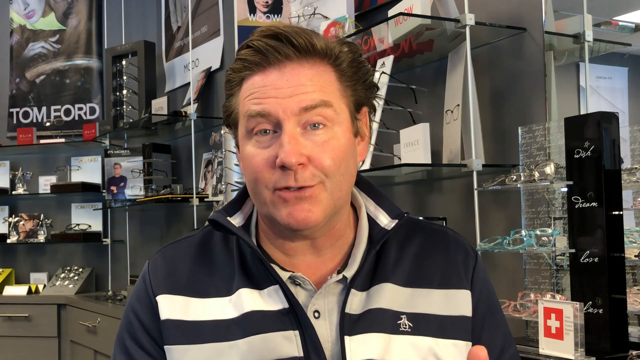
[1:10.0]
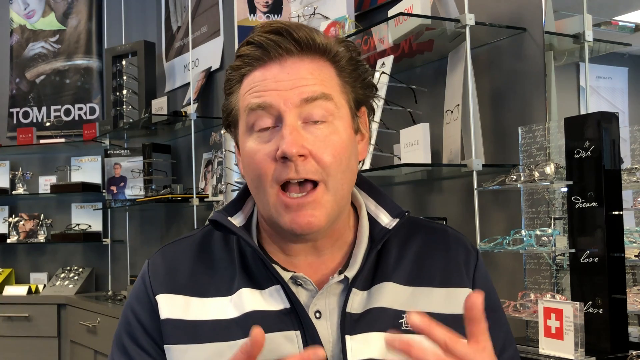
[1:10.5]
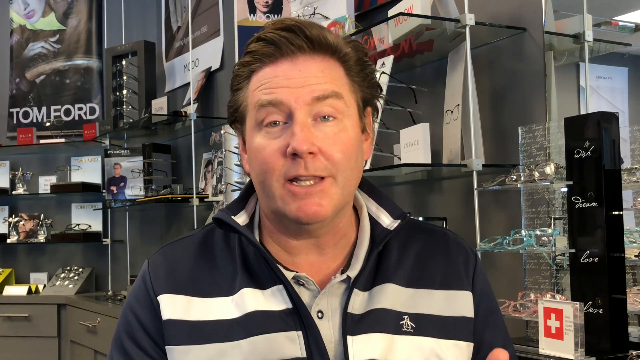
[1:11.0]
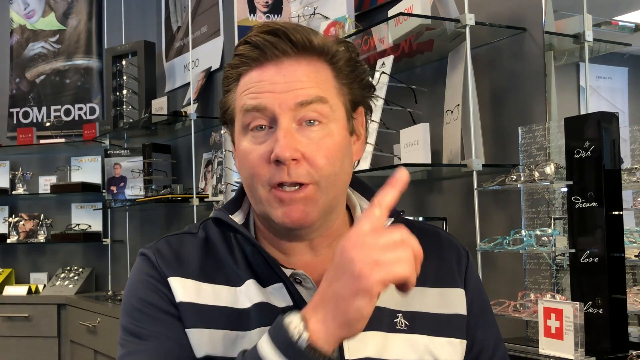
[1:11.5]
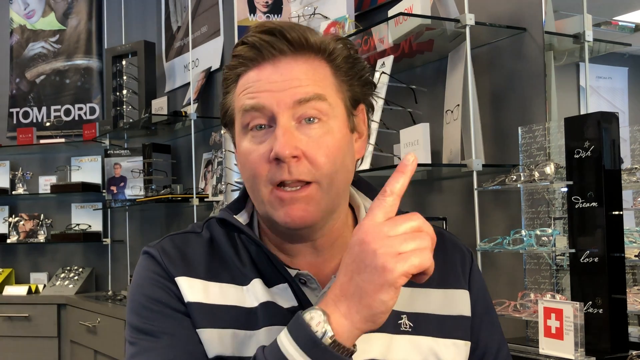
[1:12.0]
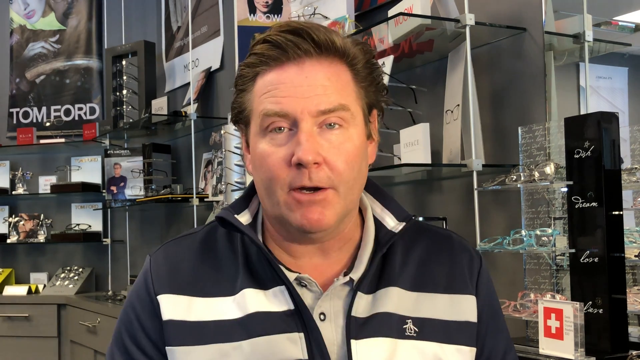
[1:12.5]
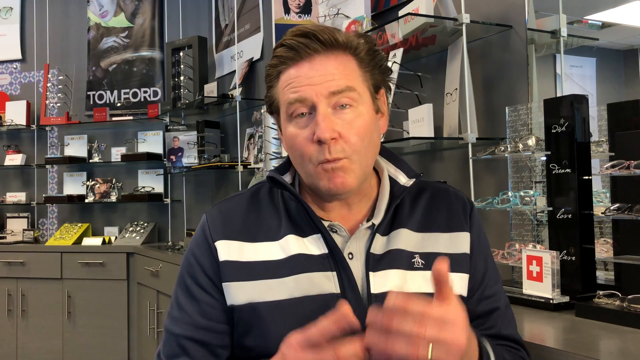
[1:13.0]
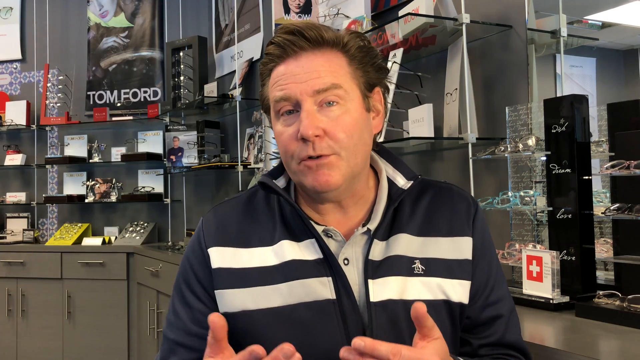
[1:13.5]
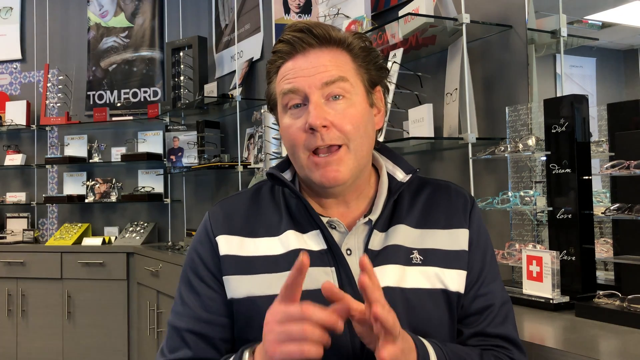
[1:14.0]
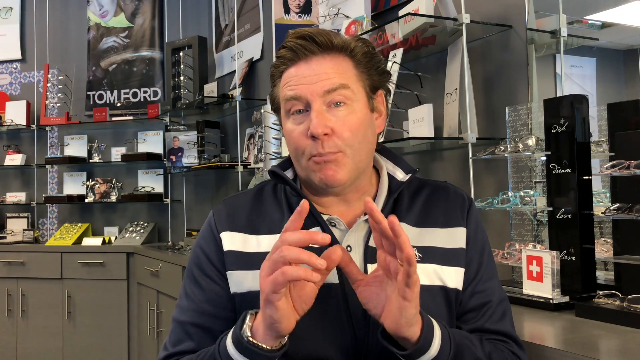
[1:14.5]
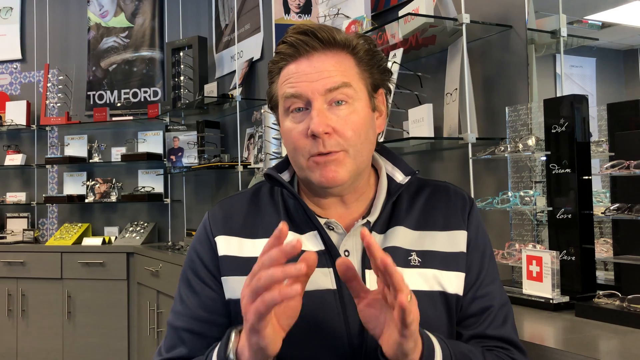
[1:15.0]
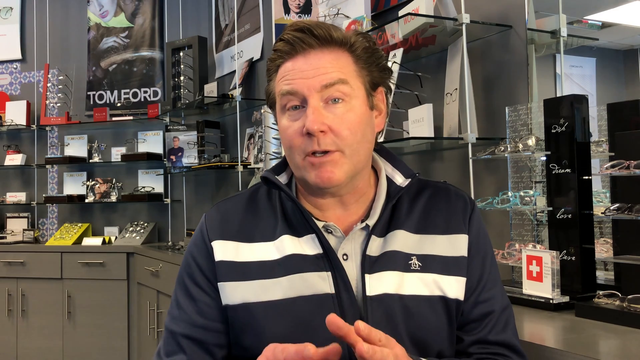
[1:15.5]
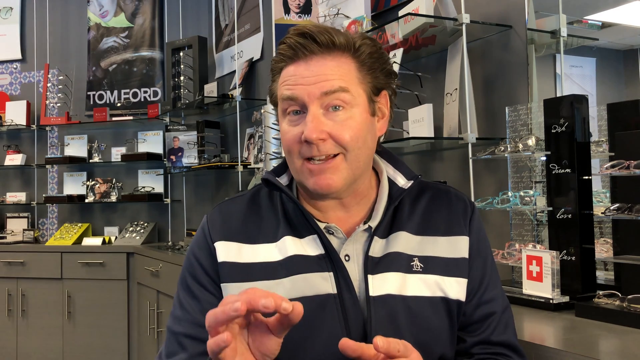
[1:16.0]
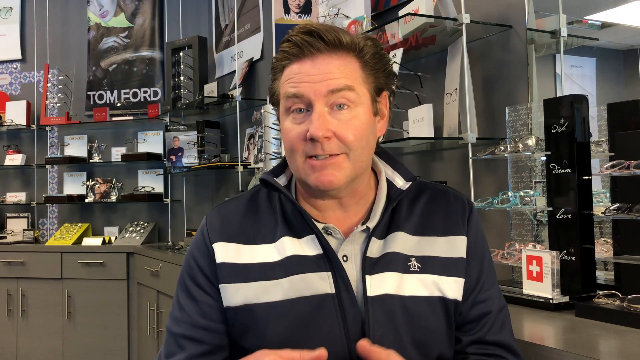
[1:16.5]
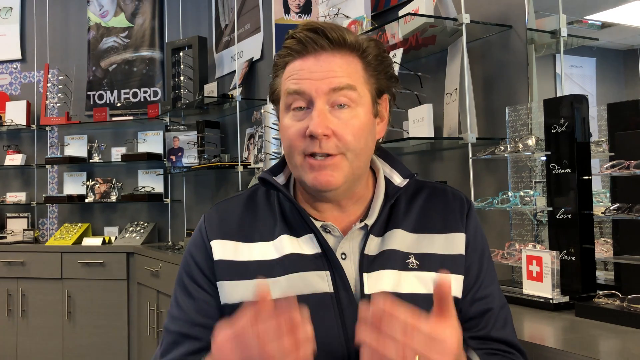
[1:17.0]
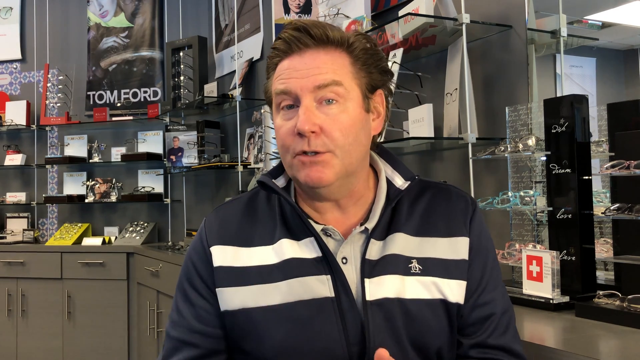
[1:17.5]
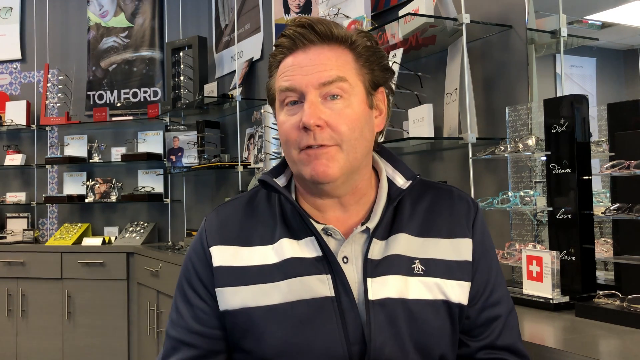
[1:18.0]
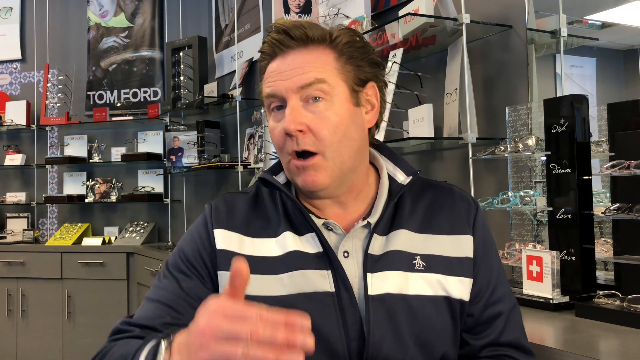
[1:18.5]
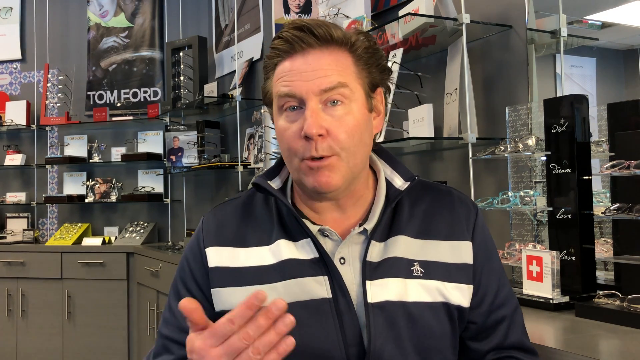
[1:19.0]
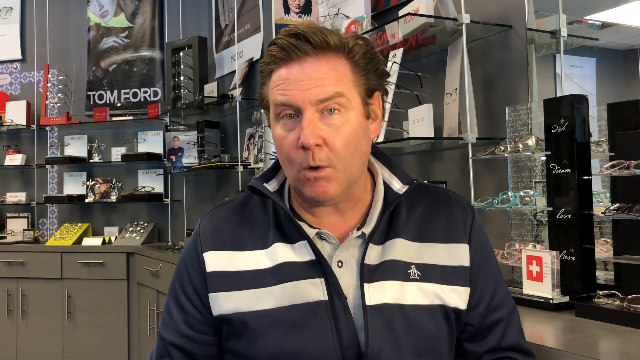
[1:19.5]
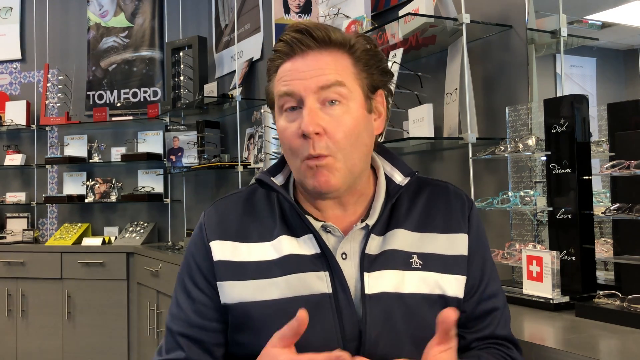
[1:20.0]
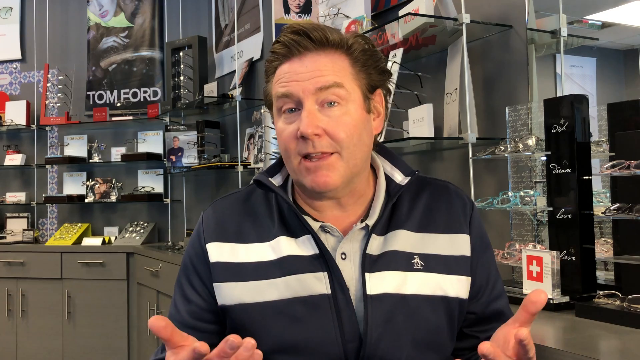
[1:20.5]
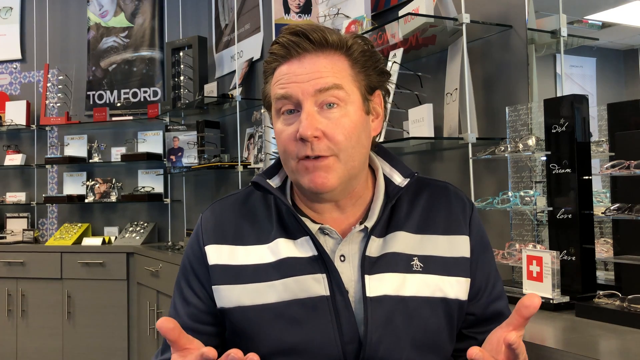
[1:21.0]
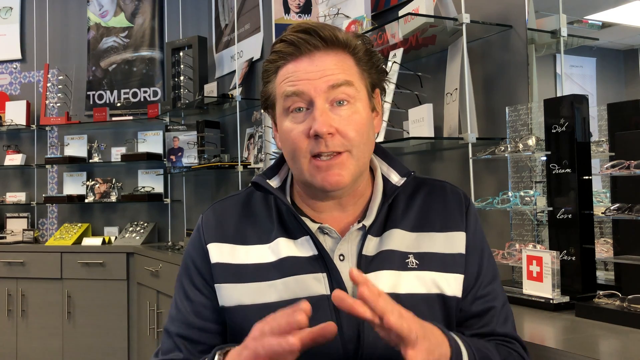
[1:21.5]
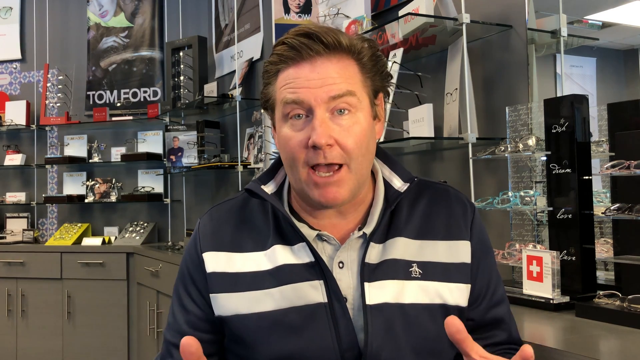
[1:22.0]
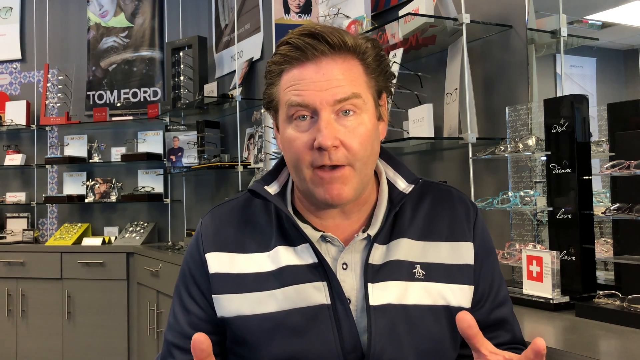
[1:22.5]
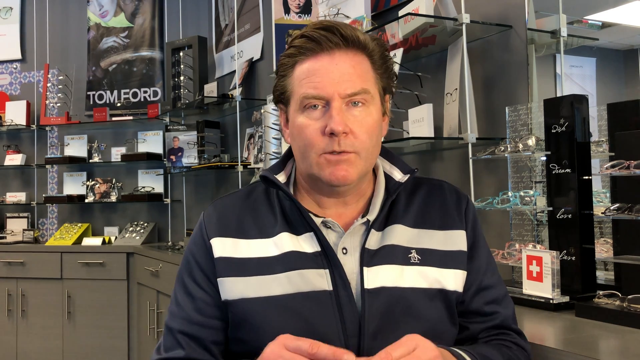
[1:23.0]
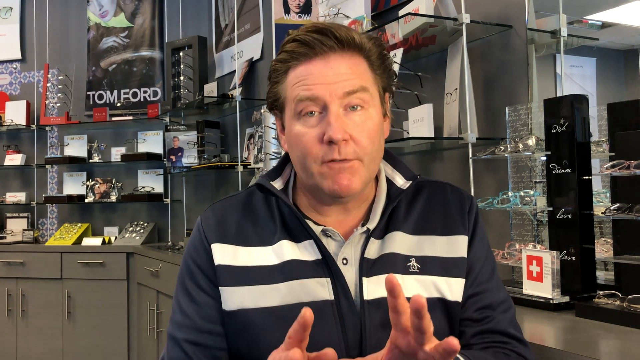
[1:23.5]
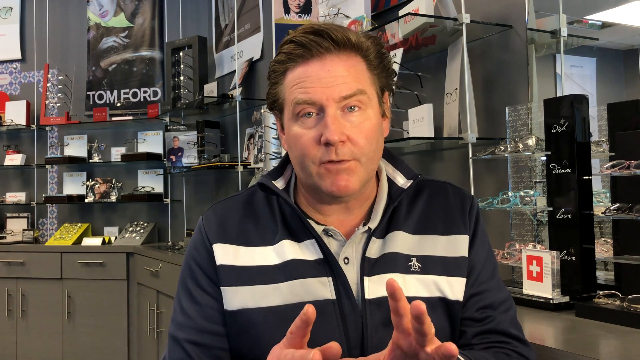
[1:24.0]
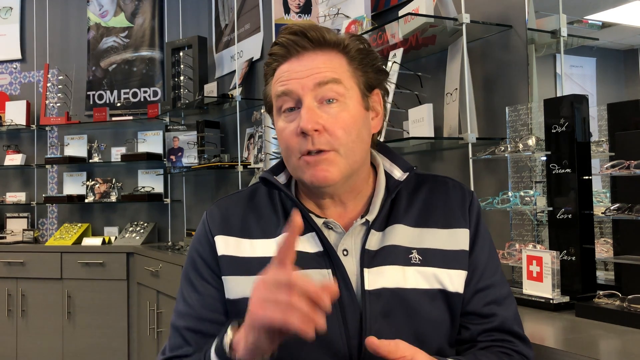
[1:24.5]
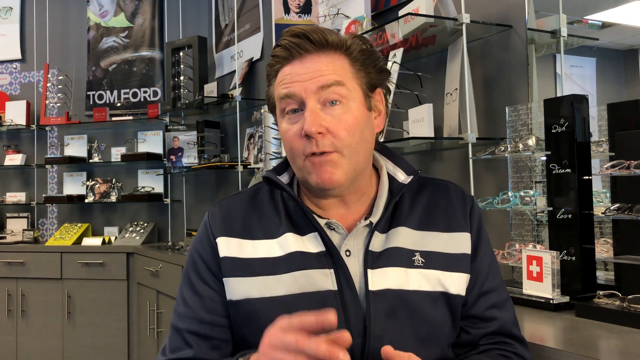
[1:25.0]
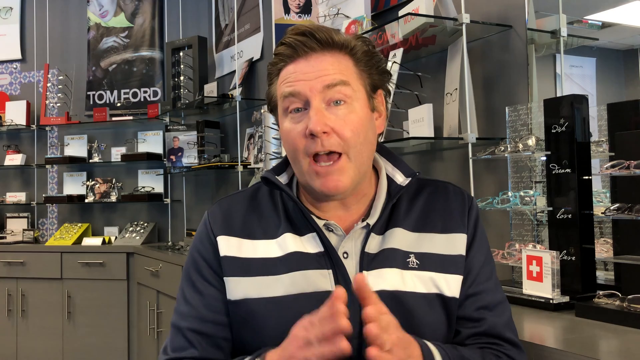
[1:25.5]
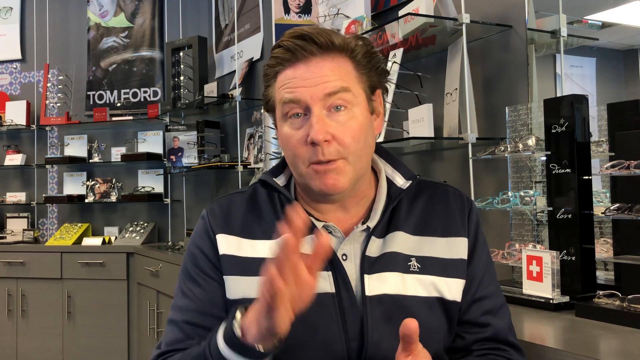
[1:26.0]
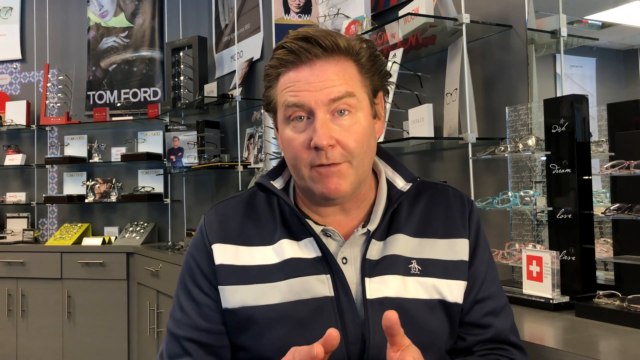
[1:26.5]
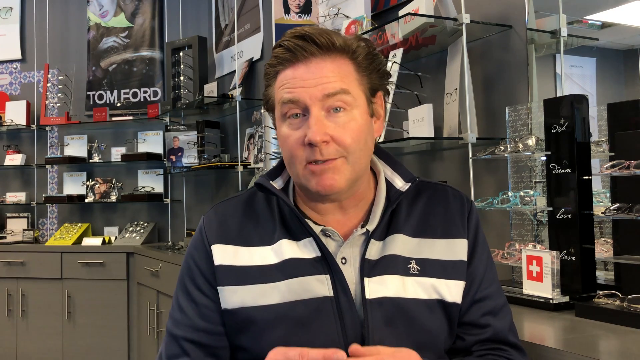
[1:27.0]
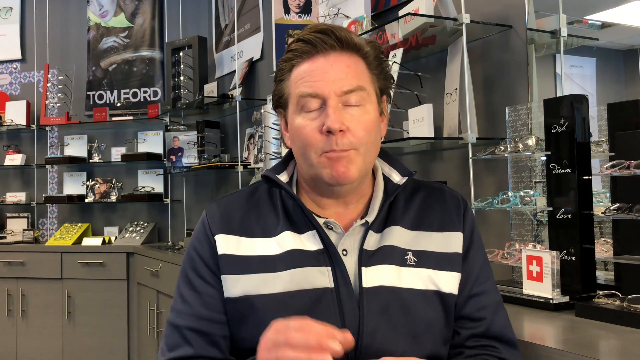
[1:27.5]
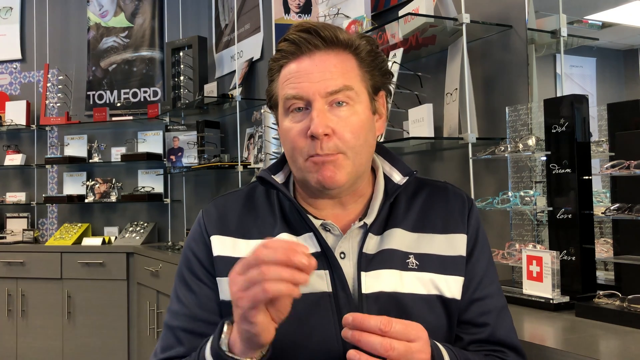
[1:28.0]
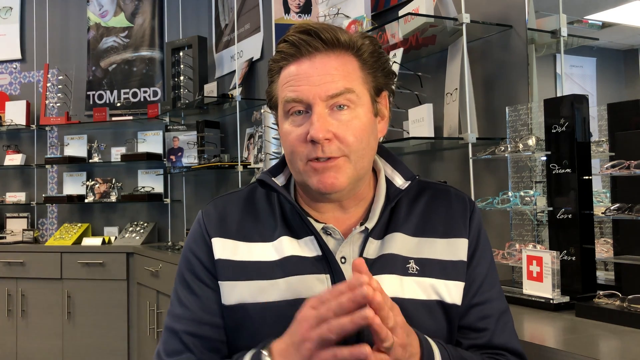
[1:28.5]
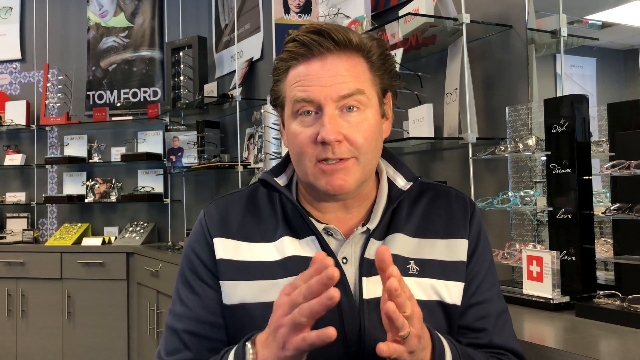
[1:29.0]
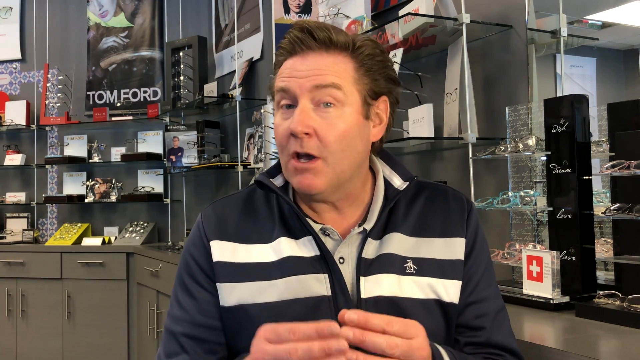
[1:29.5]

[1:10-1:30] The Caucasian optometrist, on the heftier side, with white skin and short brown hair, wears a corded, horizontally striped navy blue and white shirt, jacket or hoodie in a sort of optometry setting or studio. He talks and points up. He is the only person shown, with no transitions or changes of setting and no other people or animals.